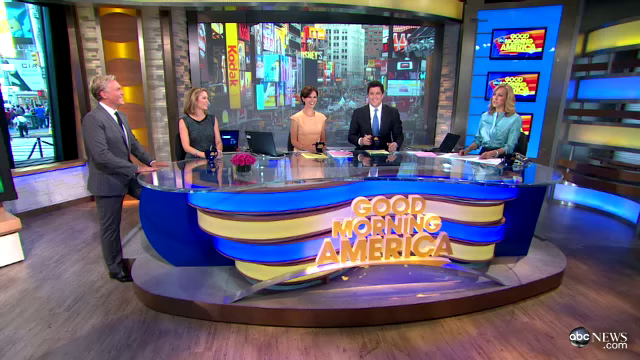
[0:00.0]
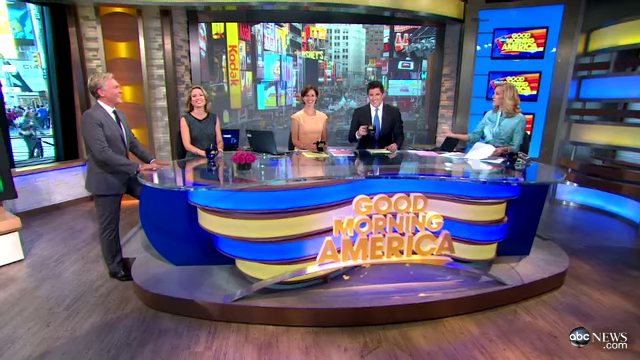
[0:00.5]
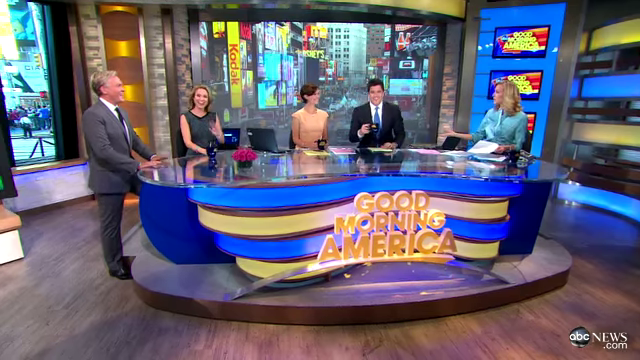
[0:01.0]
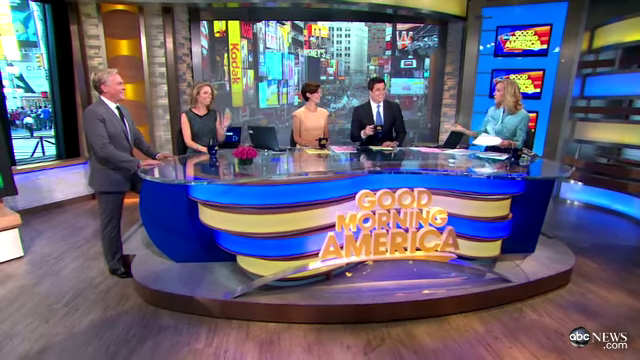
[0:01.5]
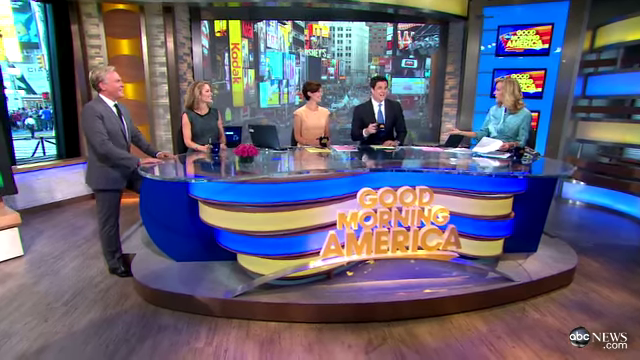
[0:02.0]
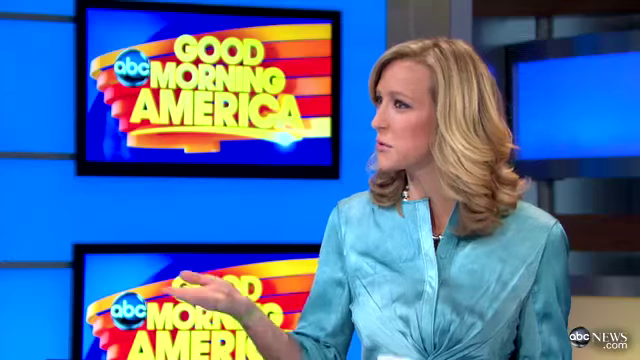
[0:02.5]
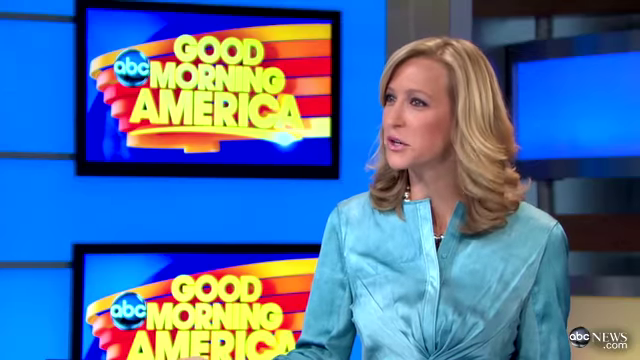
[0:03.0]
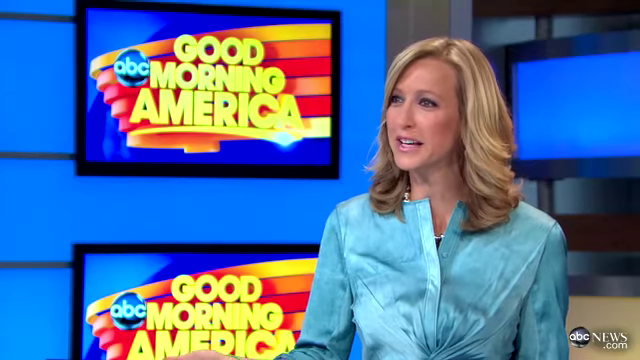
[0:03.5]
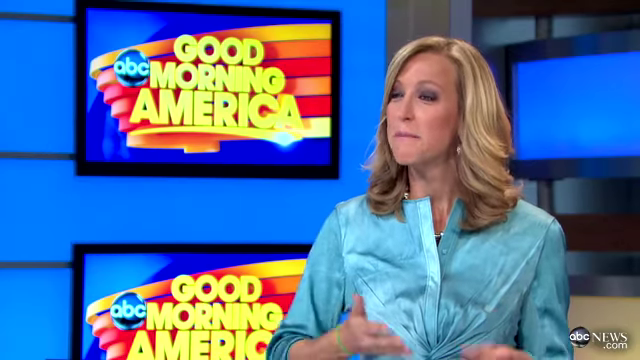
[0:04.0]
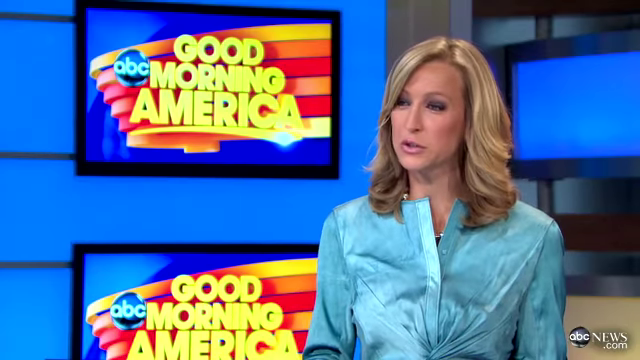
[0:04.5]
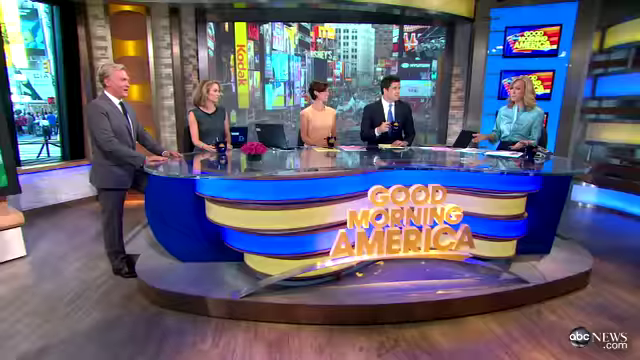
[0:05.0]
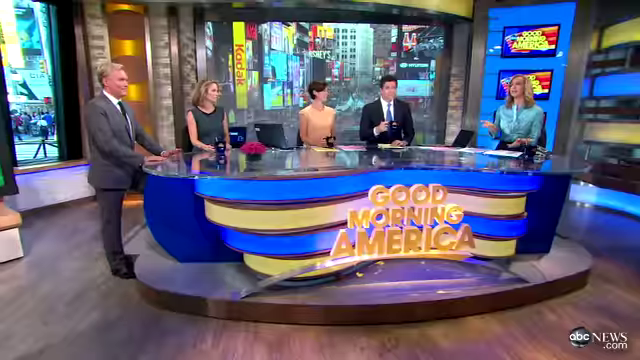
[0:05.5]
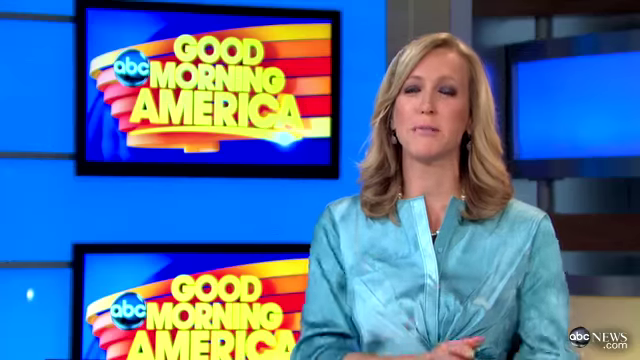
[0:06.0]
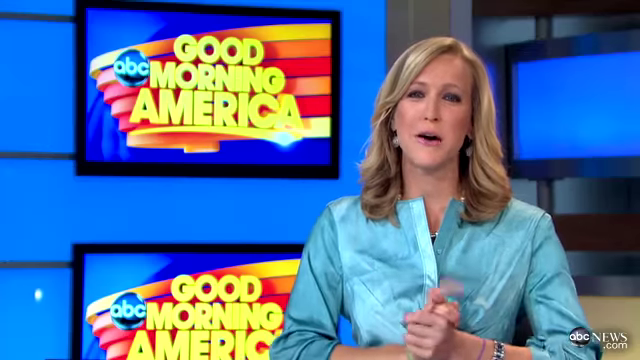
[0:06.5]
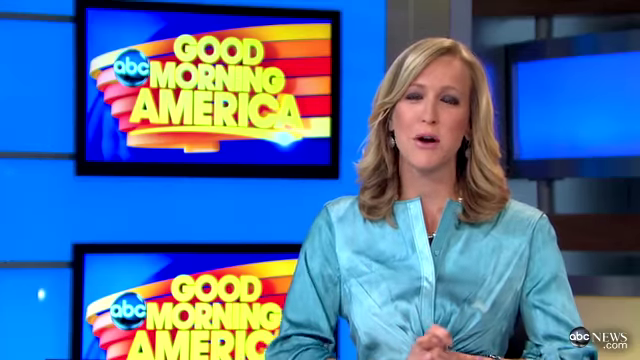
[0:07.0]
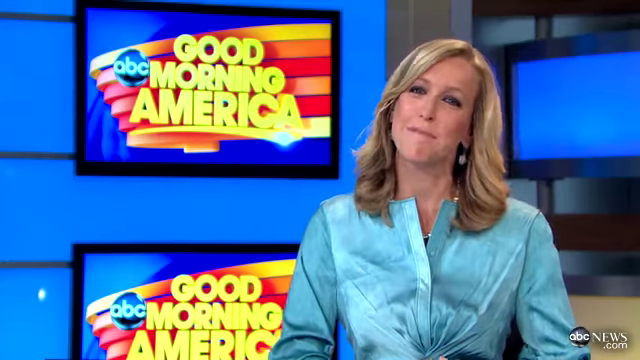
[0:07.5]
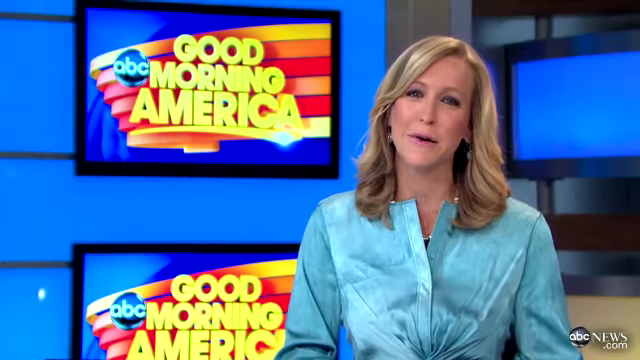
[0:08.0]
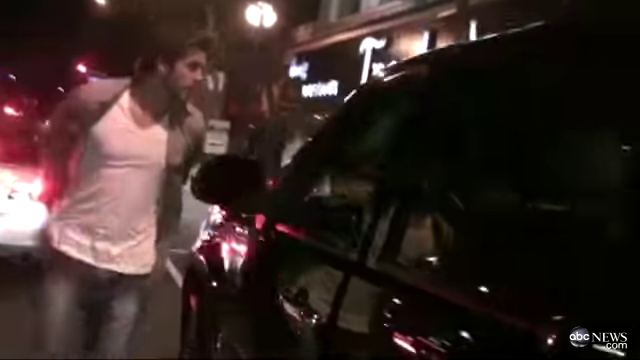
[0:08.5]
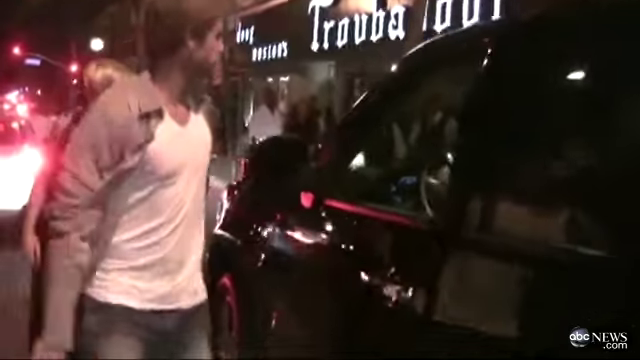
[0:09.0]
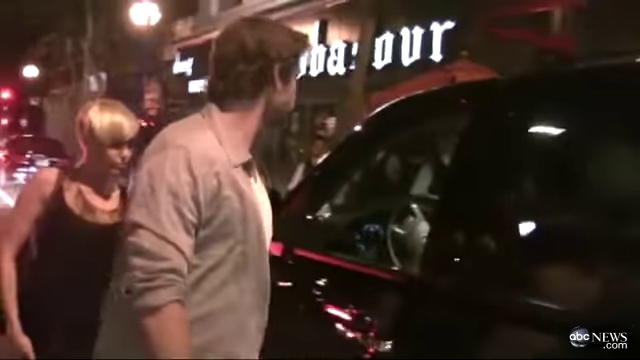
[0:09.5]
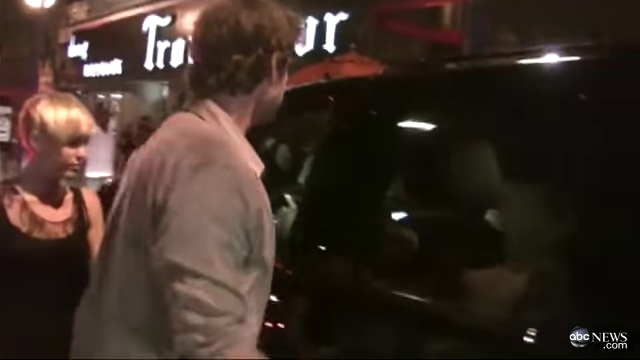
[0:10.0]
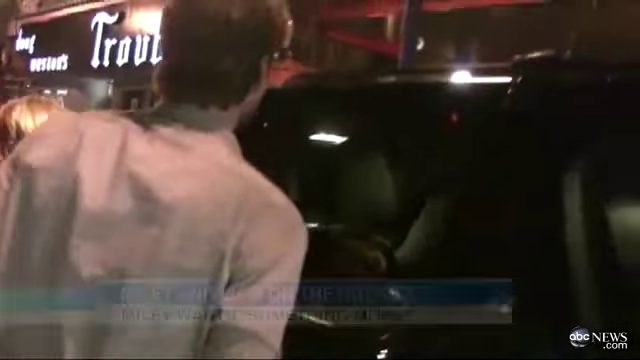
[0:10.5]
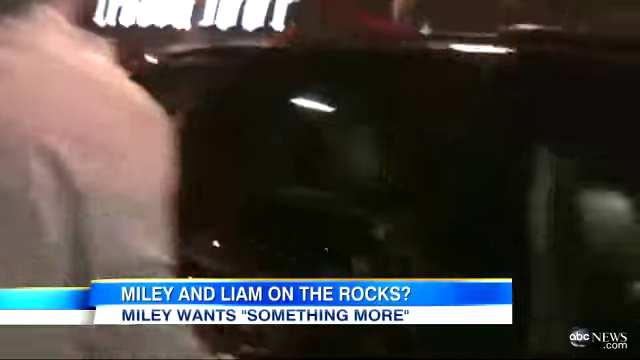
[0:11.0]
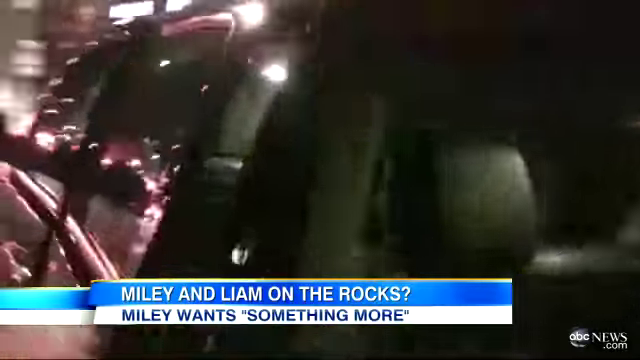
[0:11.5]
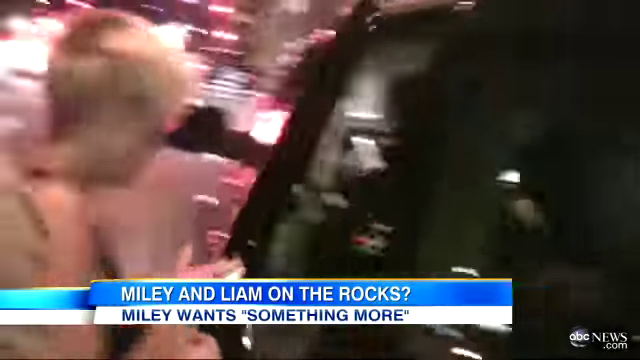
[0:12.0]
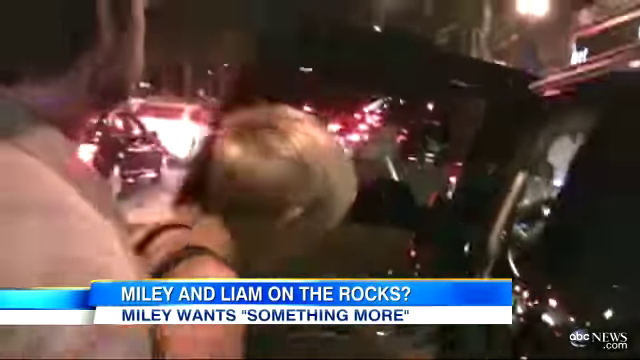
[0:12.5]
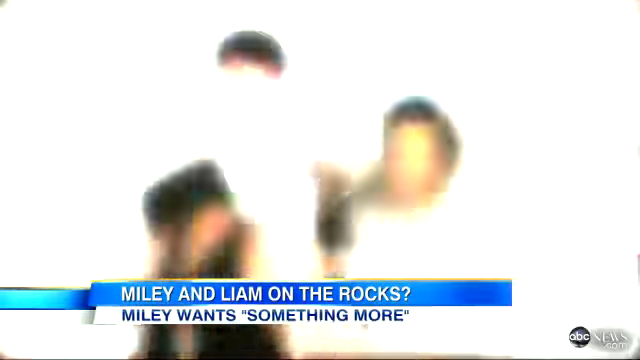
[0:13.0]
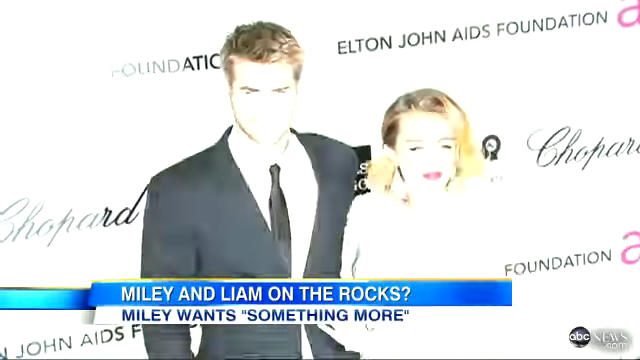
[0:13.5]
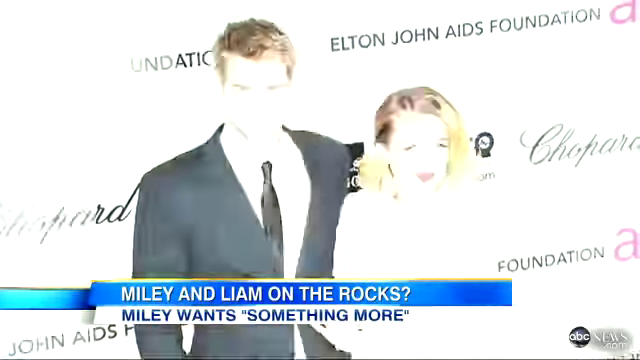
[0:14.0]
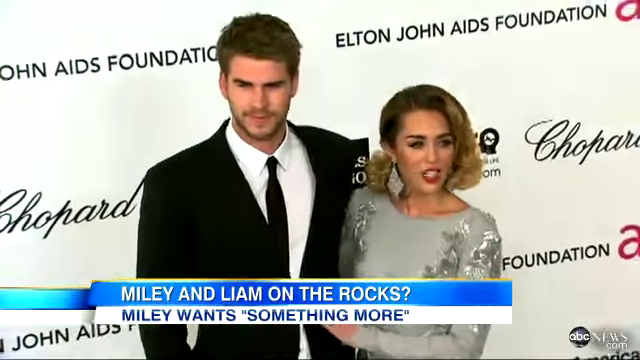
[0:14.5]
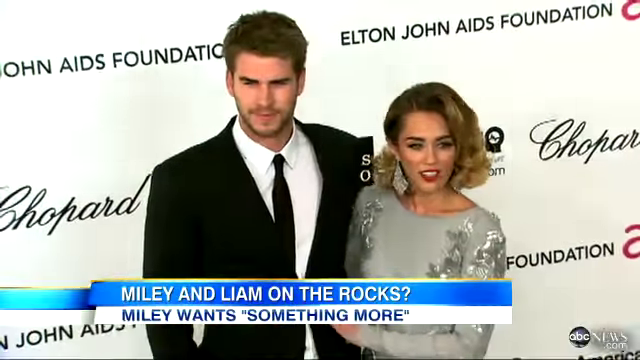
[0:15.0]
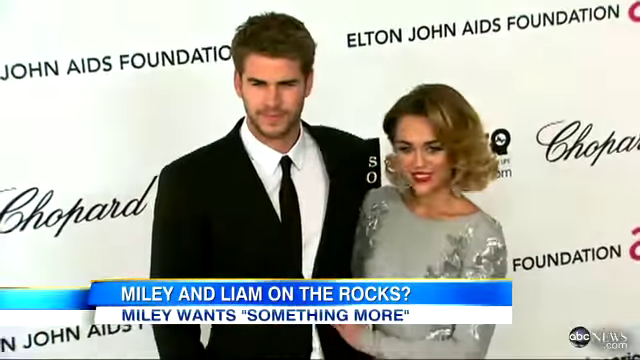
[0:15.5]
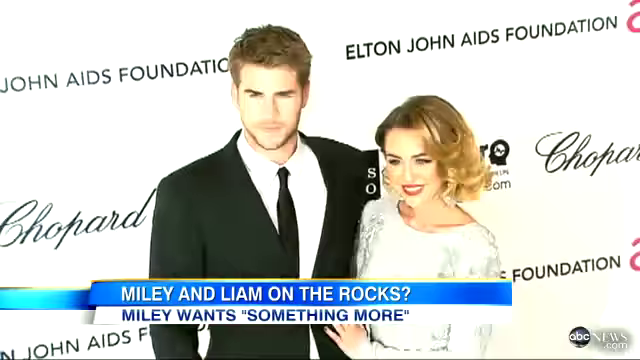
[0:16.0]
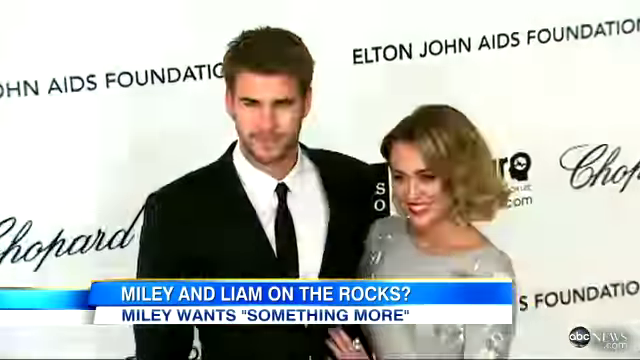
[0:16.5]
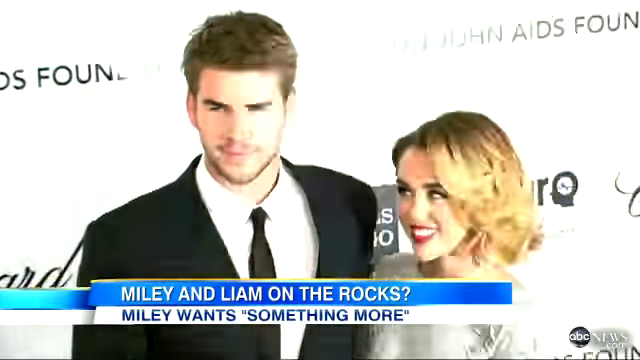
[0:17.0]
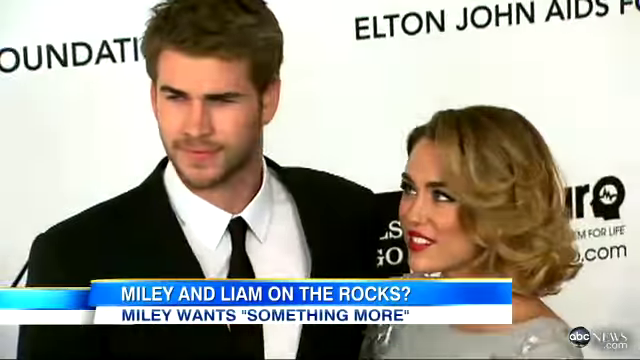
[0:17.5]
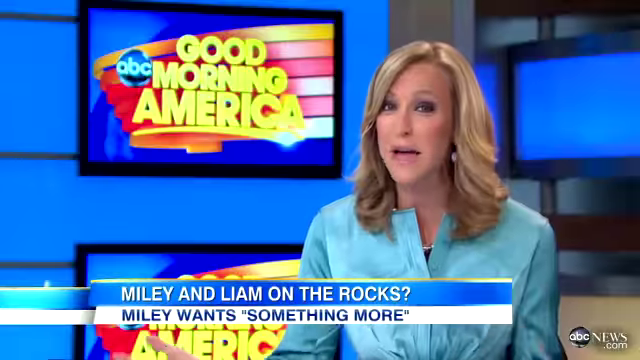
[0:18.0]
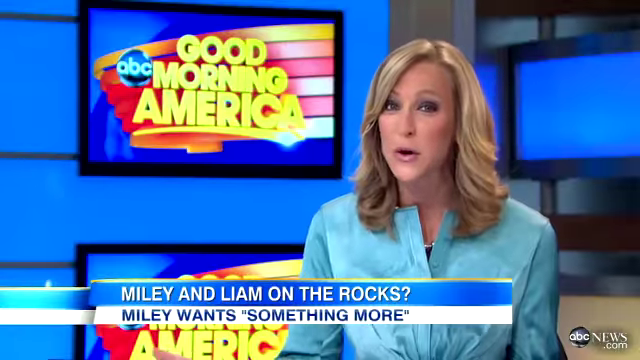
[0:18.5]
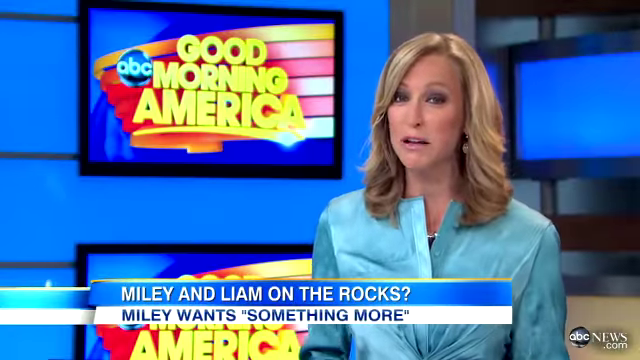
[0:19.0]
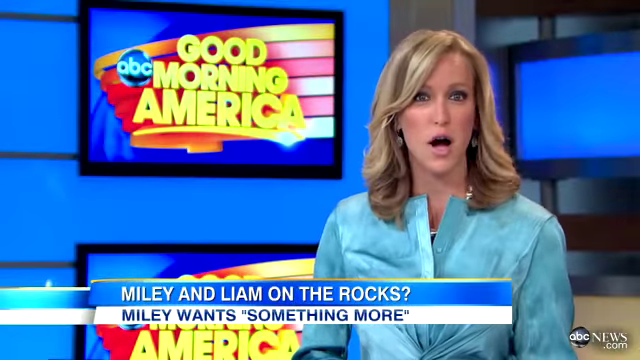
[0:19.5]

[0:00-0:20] This is a segment of Good Morning America. Five people are in the studio: four at the table and one standing up. There are three women anchors and two men anchors; the men are probably middle-aged, nearly 50 or so, and the women probably in their 40s to 50s. They are at a little platform at the table, kind of like a news desk. Behind them there appears to be a big window with what looks like the actual city of New York City beyond it, and there are three TVs behind them and a hardwood floor. The men wear nice suits and the women are dressed up in nice clothing. A blonde woman is talking. A picture of Miley Cyrus and Liam is shown, then Miley and Liam getting into a car, and then the two of them at what seems to be a photo shoot at Elton John's AIDS fundraiser.